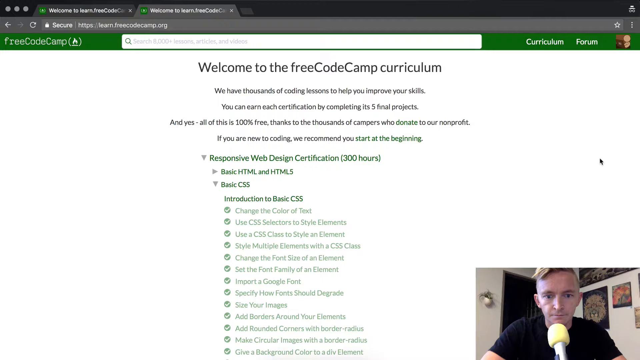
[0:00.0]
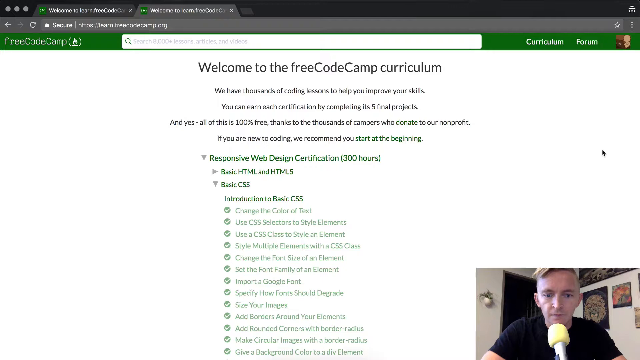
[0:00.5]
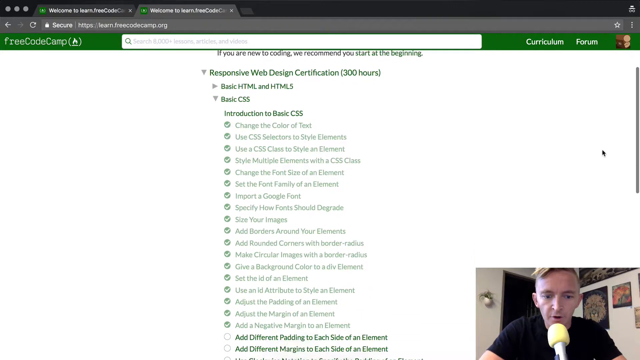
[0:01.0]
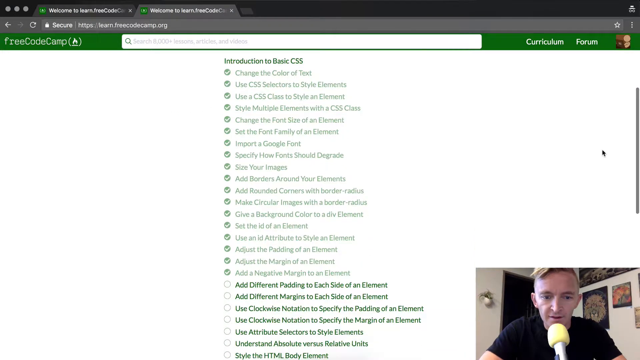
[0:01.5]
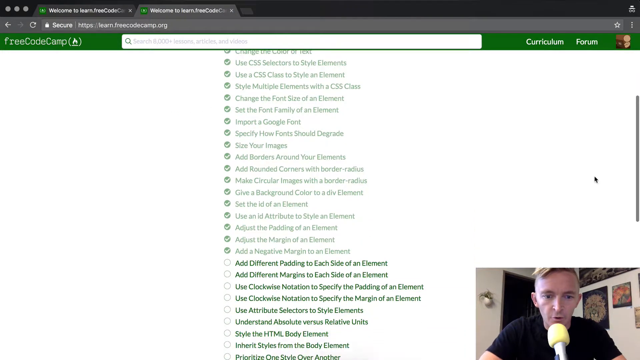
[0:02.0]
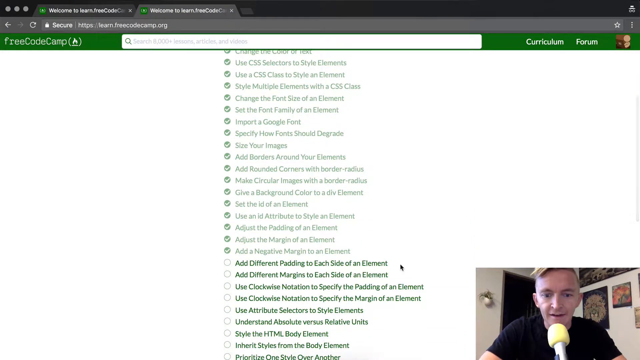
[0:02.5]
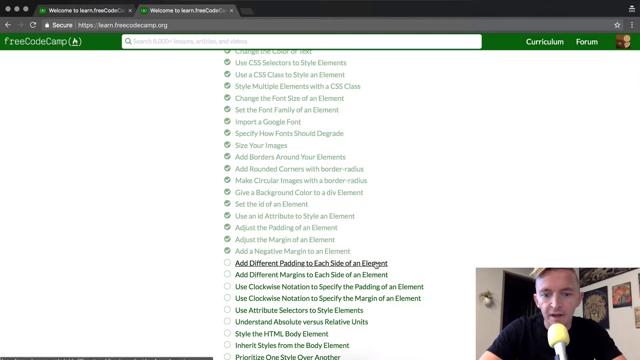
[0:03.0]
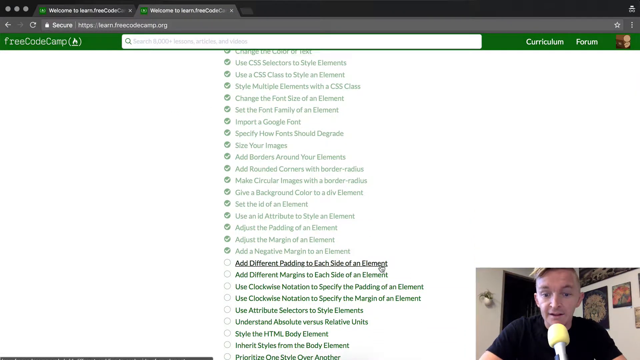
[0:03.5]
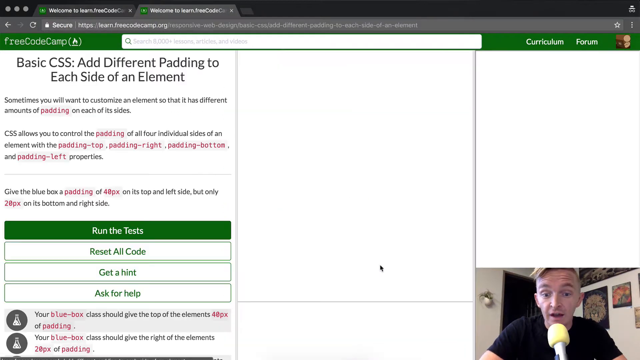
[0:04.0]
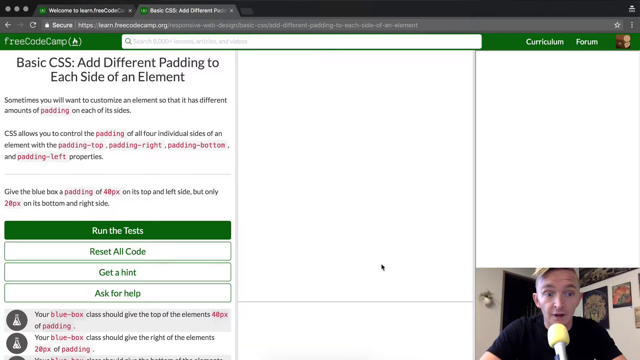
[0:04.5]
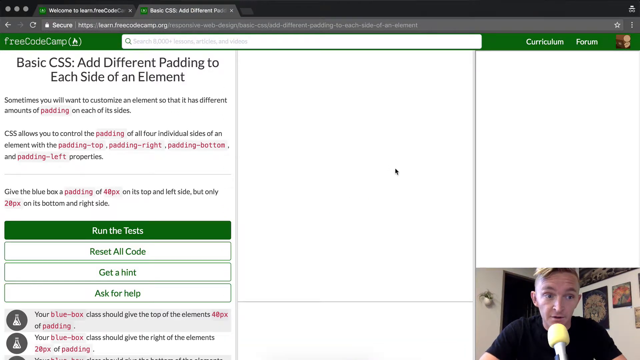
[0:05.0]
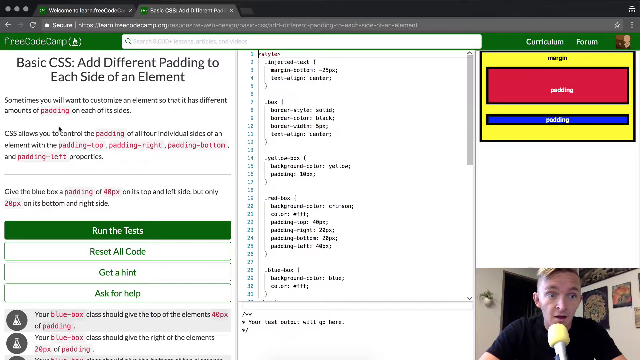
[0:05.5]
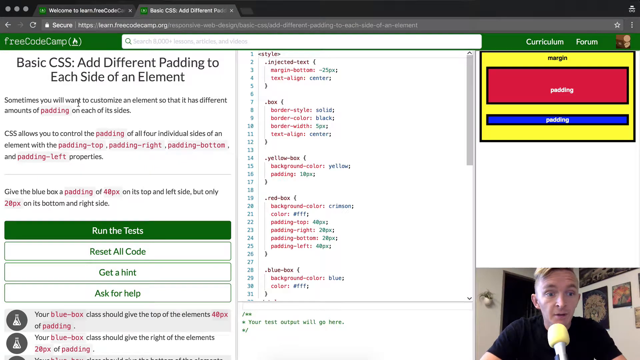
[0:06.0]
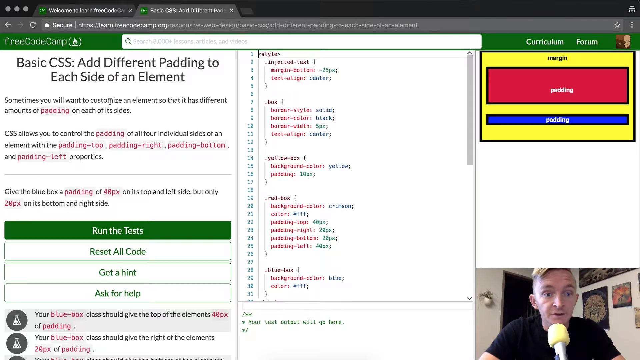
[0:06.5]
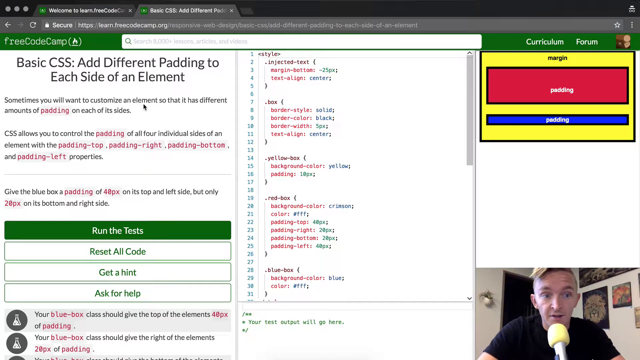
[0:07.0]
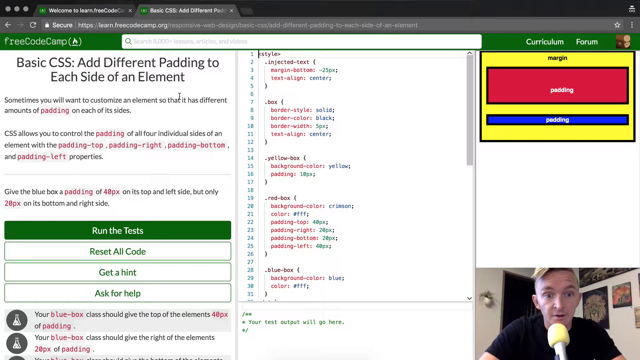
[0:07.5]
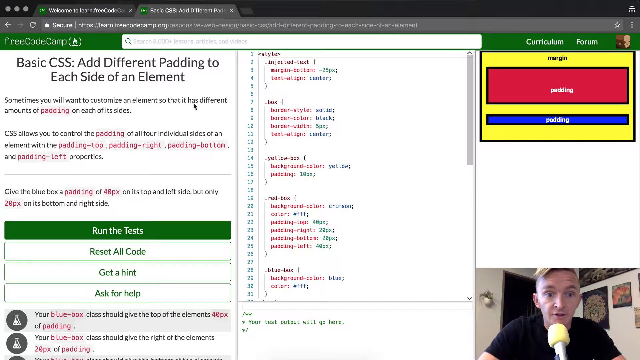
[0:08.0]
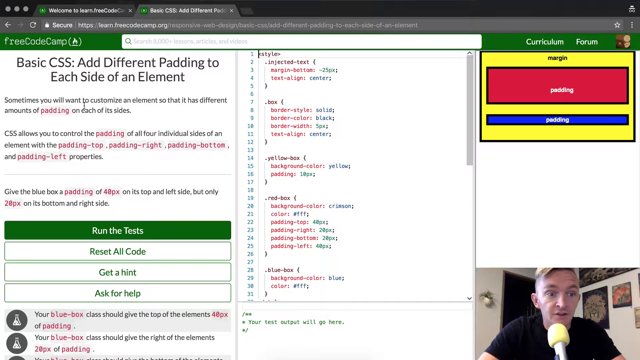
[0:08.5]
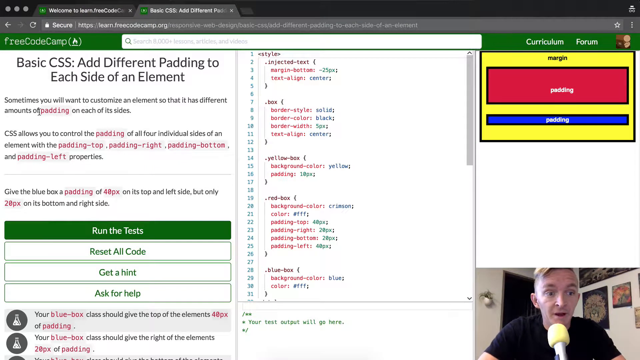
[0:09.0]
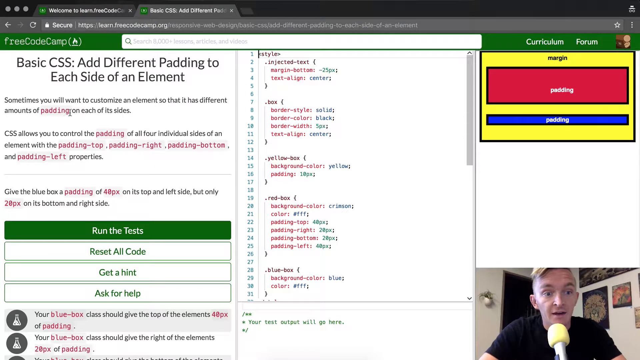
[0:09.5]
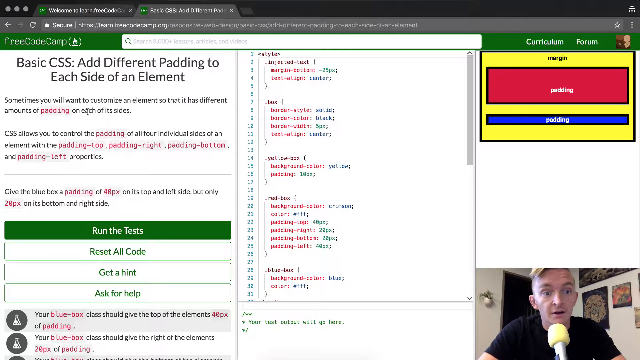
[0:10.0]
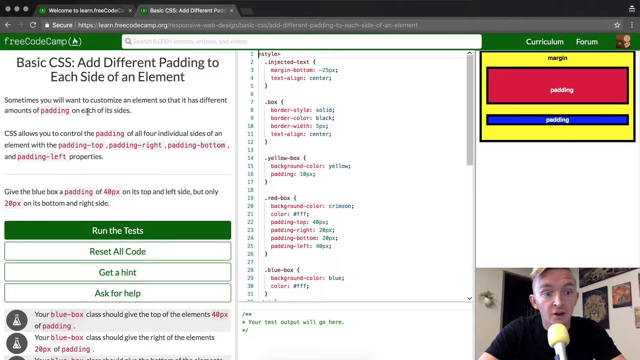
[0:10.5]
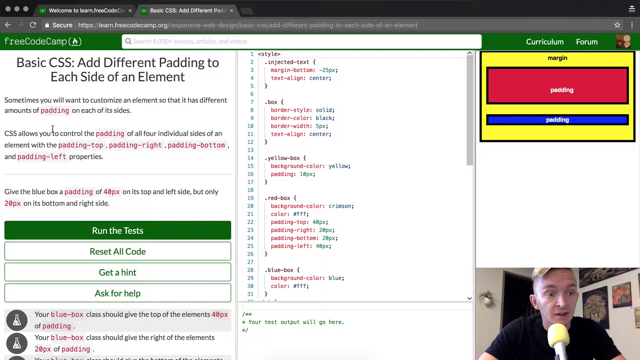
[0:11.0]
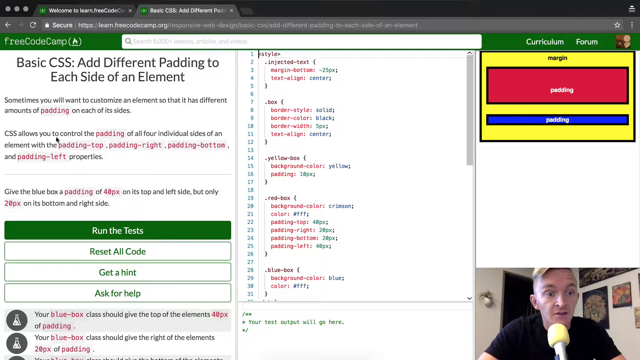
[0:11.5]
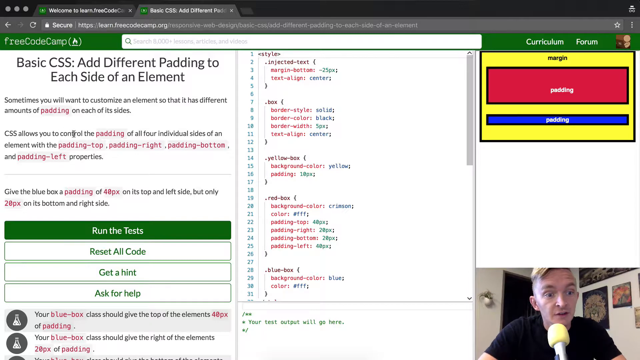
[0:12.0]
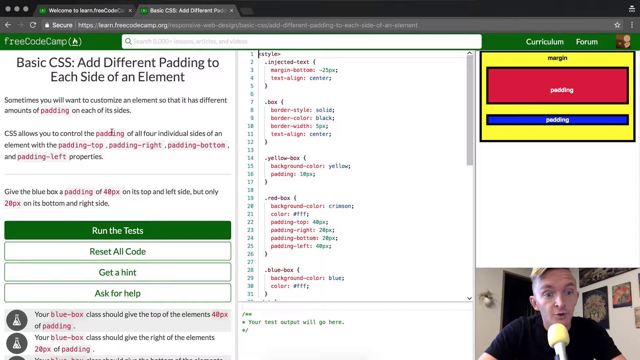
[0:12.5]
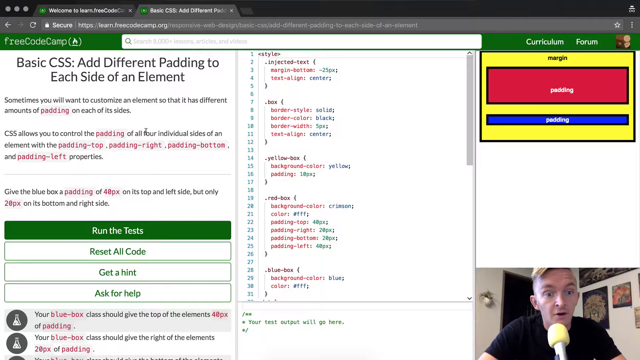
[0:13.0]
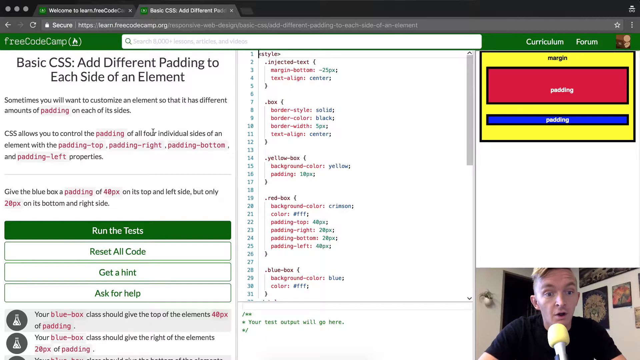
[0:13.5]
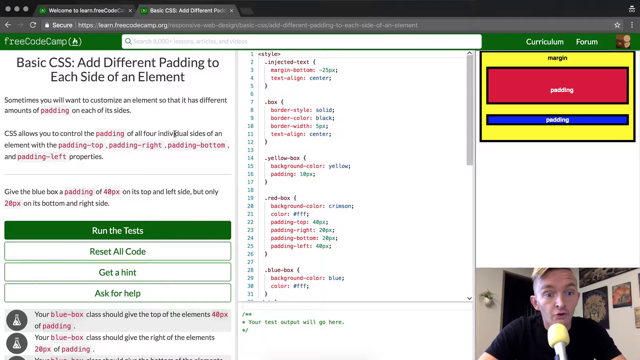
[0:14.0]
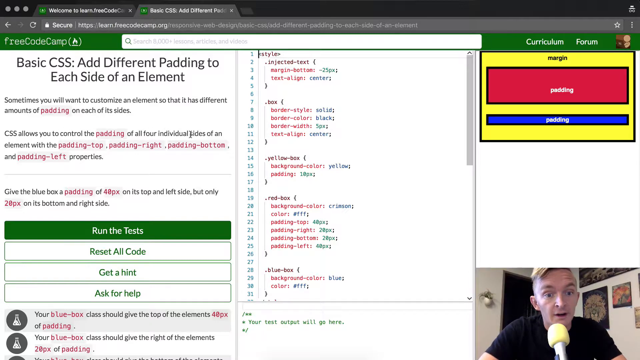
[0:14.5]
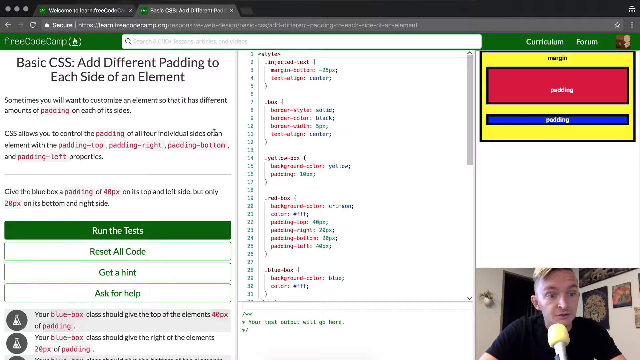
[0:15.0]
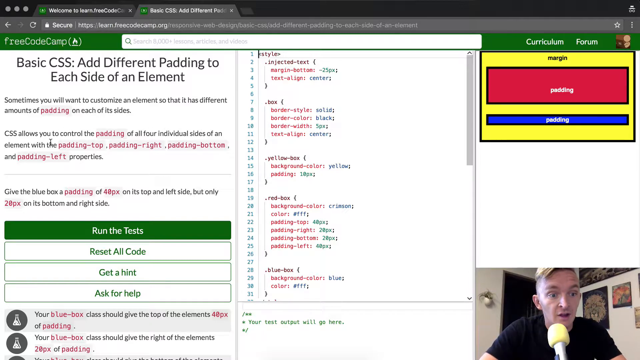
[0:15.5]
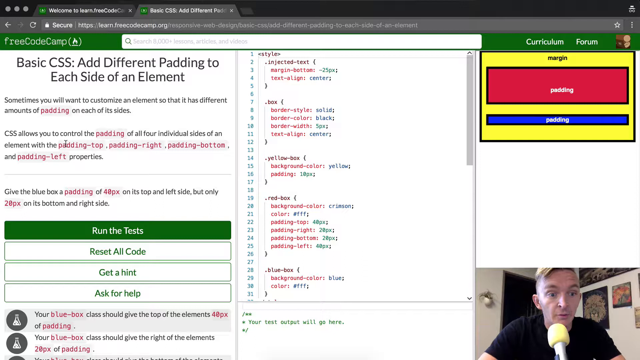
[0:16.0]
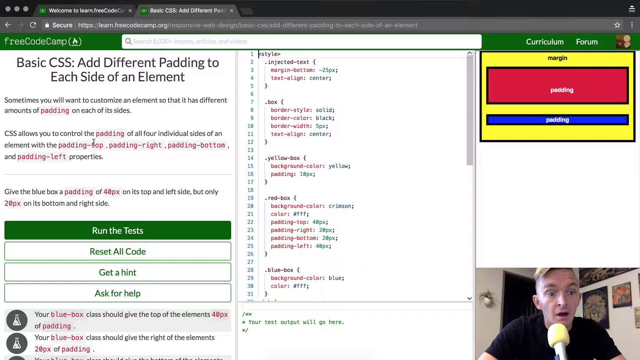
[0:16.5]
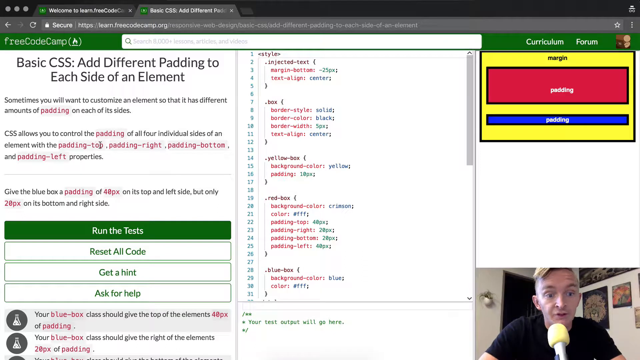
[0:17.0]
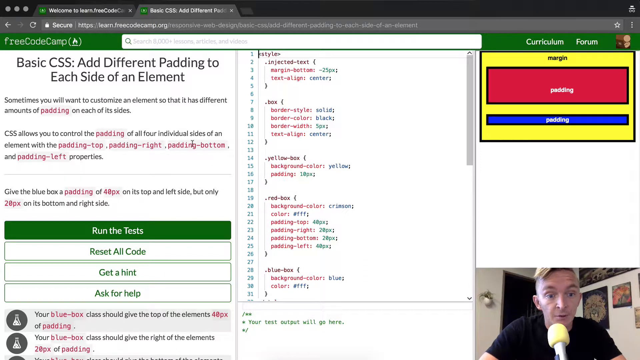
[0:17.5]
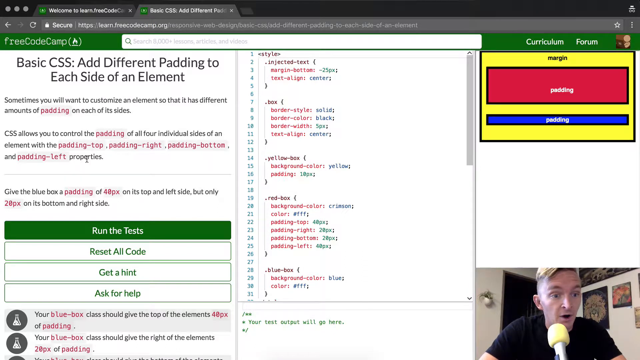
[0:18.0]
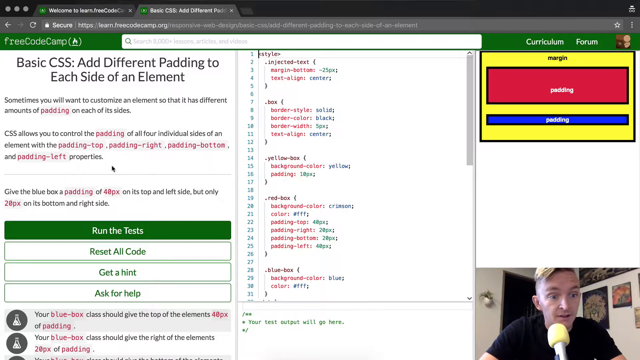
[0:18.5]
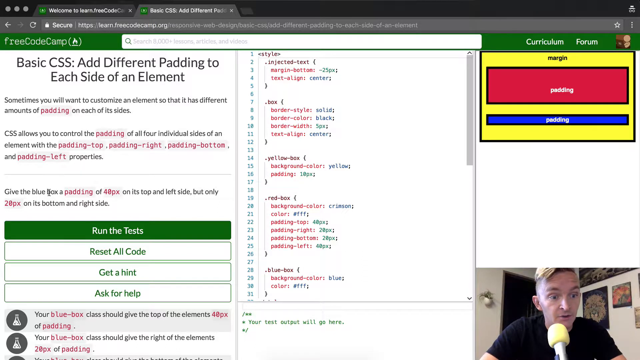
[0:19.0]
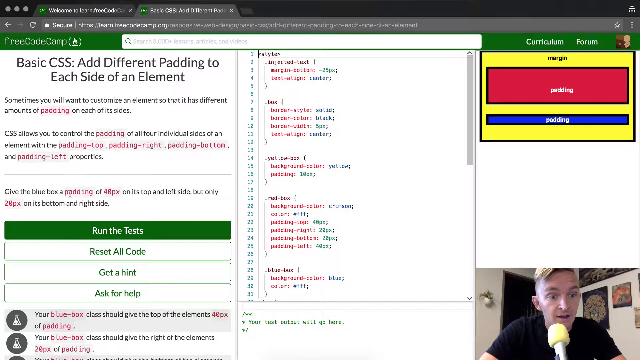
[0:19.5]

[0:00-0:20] A web page for a free CodeCamp website is shown. In the bottom right is a camera view of the instructor, a man with blonde hair wearing a black shirt, with a microphone that has a yellow top and a black bottom. There are some posters behind him in the camera view, but the focus is on the website. The top left reads "basic CSS: add different padding to each side of an element." A panel of code is in the center of the page, and on the bottom left are buttons to run test, reset code, get a hint, and ask for help. It looks like a tutorial page for coding. As he speaks, the instructor points with his cursor to different words in the instructions, moving it along the text to show which part he is referring to.